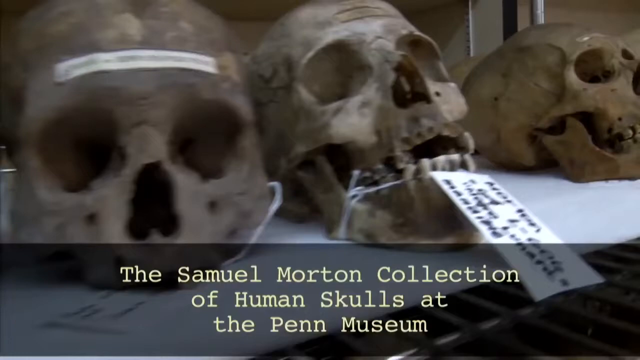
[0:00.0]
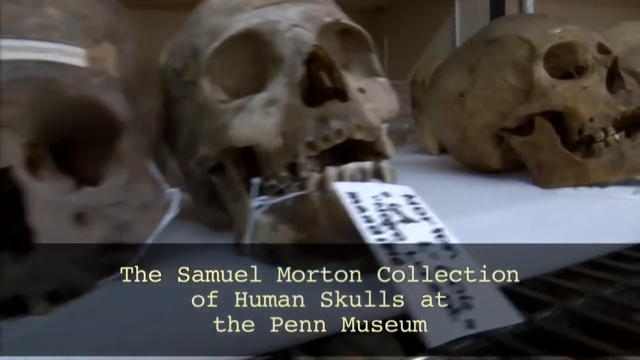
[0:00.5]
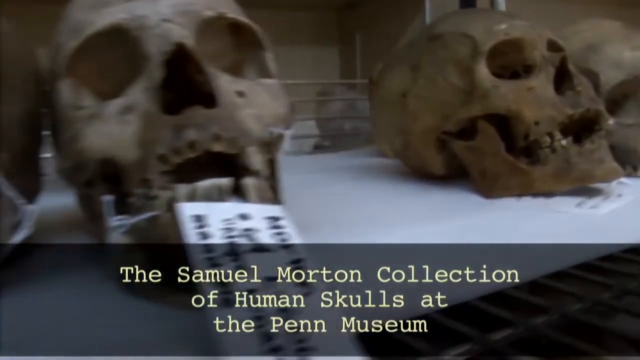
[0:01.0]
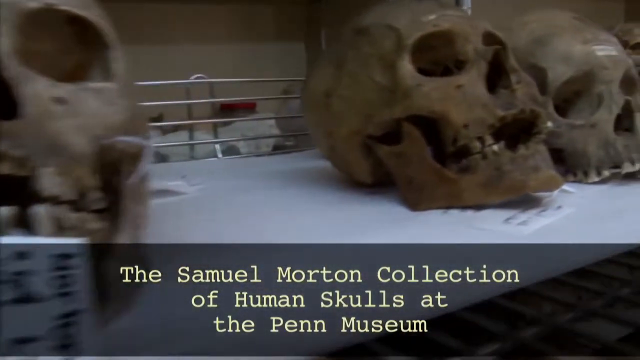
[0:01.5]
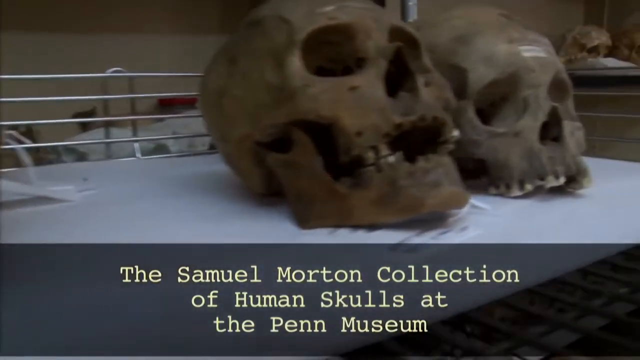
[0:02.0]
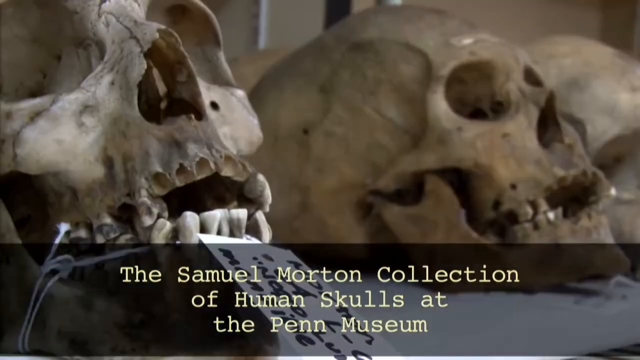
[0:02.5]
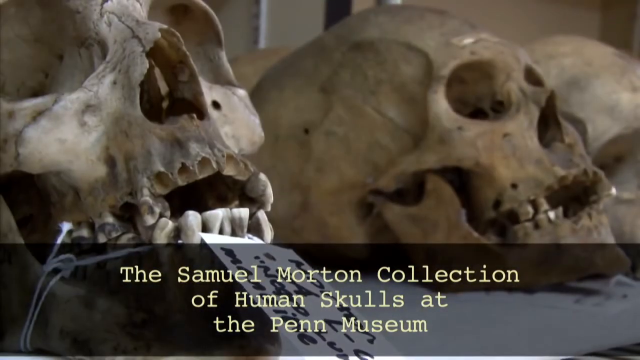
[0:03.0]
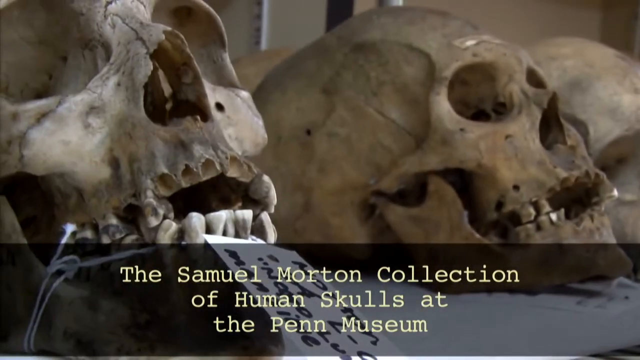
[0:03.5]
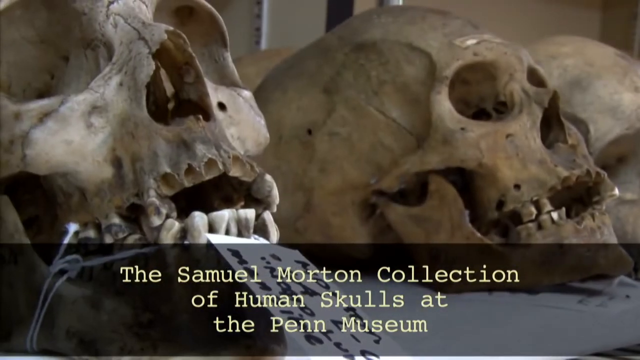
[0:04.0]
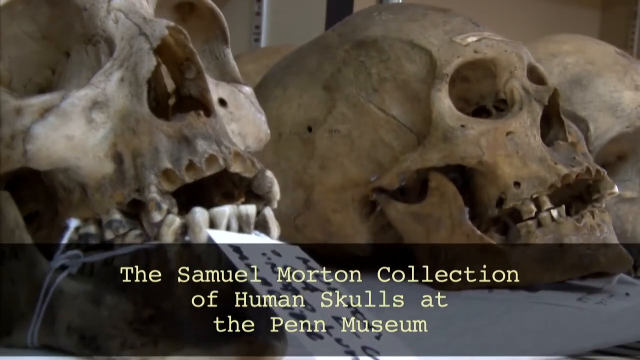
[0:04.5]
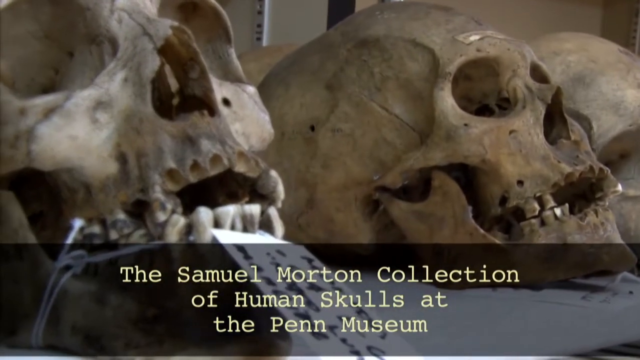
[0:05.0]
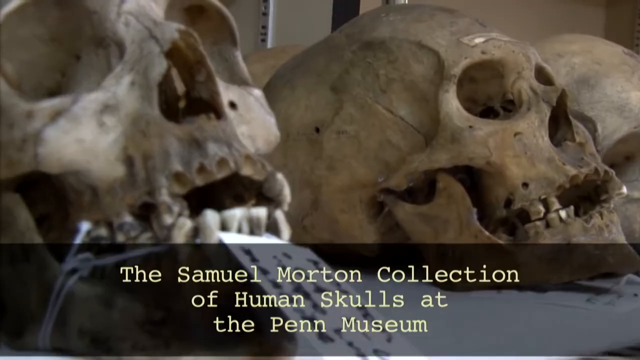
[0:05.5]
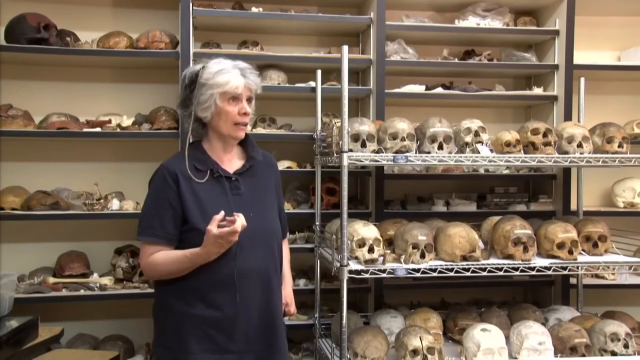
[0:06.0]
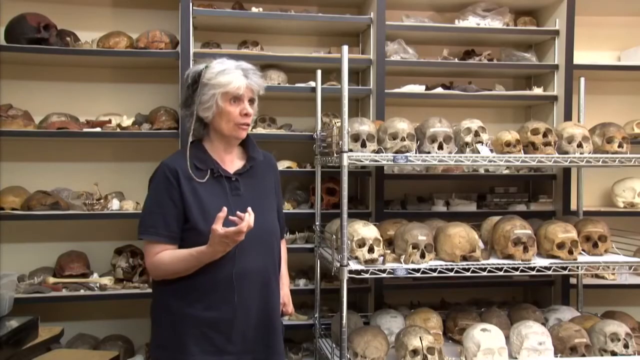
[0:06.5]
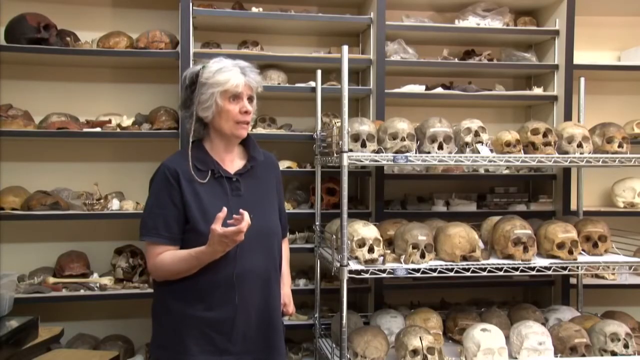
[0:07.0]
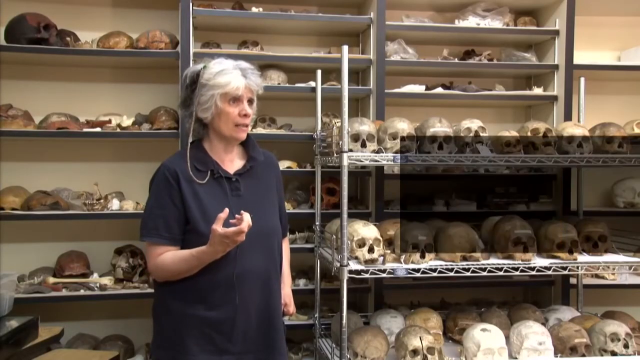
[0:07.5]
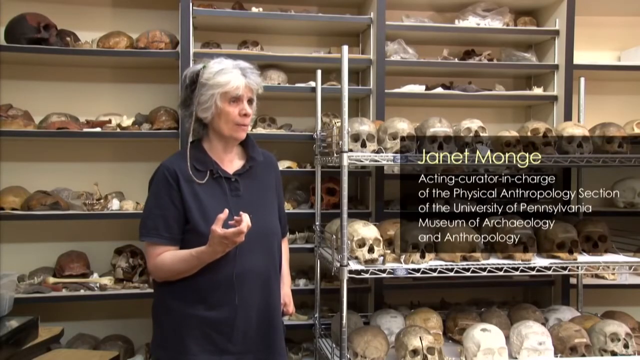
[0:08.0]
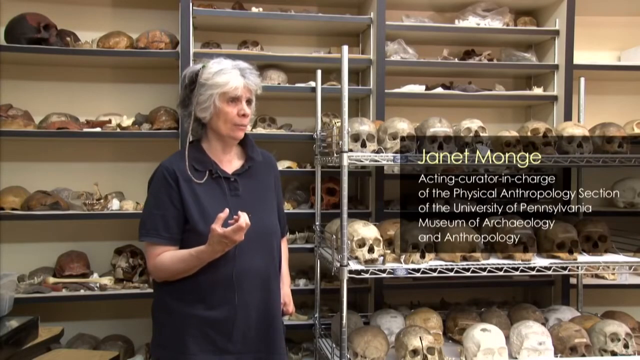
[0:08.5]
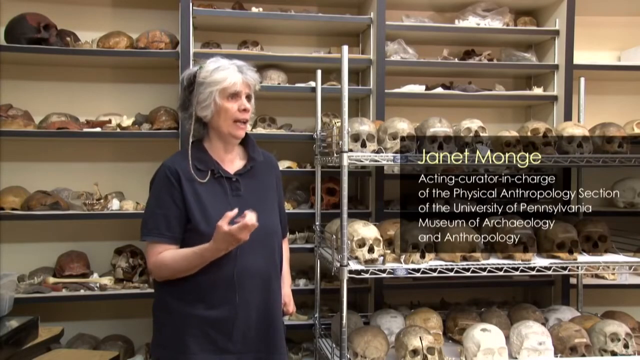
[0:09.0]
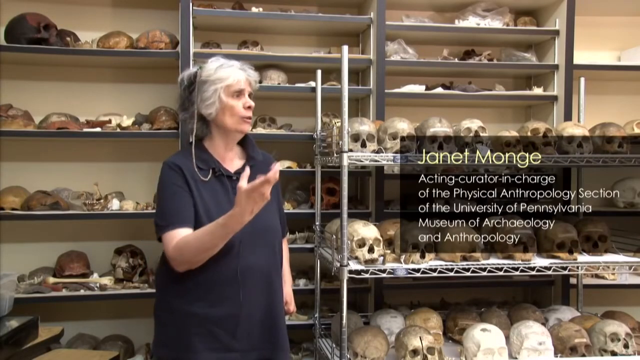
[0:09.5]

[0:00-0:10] Several skulls are lined up horizontally on a white border surface. The skulls have white tags with black text on them. At the bottom of the frame is a dark grey, partially transparent text box containing white text that says "The Samuel Morton Collection of Human Skulls at the Penn Museum." The camera pans to the right, past two more skulls. The video then switches to a close-up of a skull with a tag connected to its teeth or lower mouth area, with two skulls to the right of it in the shot. Next comes a shot of a woman standing in a room full of skulls, with skulls on shelves behind her and skulls on metal shelves to her right. She has white hair and wears a black polo shirt. Her left arm and hand are at her left side, while her right arm is bent and curled so that her palm faces up, with the fingers of her right hand slightly curled. The woman speaks. On the right side of the frame, a dark grey, partially transparent text box appears and expands from the right side toward the left. At the top of the box, yellow text says "Janet Monge," and beneath it, white text says "Acting Curator in Charge of the Physical Anthropology Section of the University of Pennsylvania Museum of Archaeology and Anthropology." The woman raises her right hand and points with it as she continues.